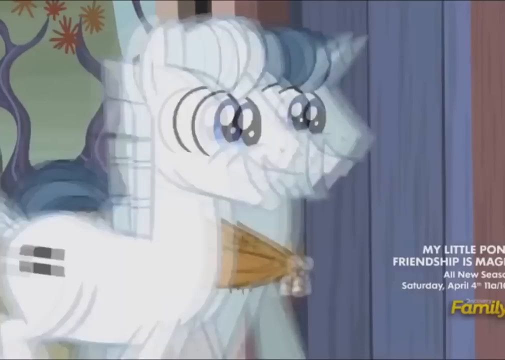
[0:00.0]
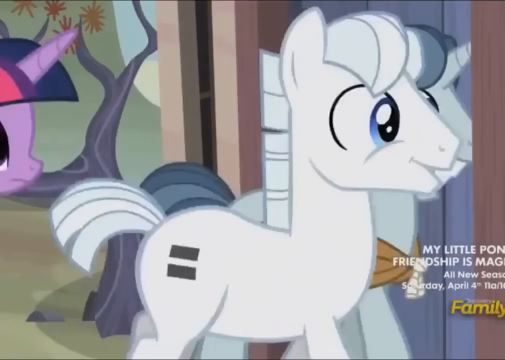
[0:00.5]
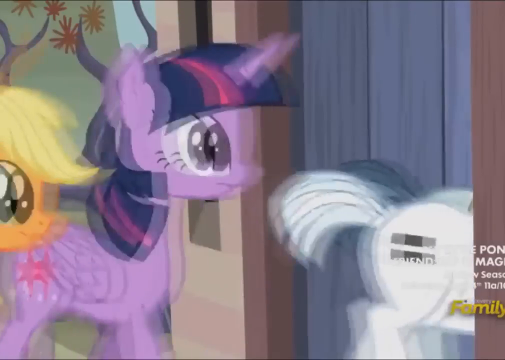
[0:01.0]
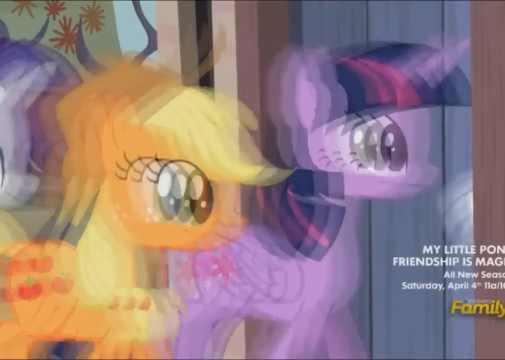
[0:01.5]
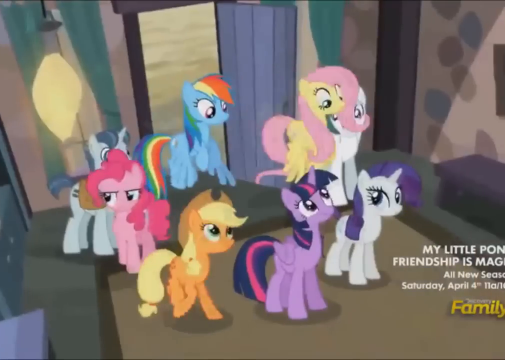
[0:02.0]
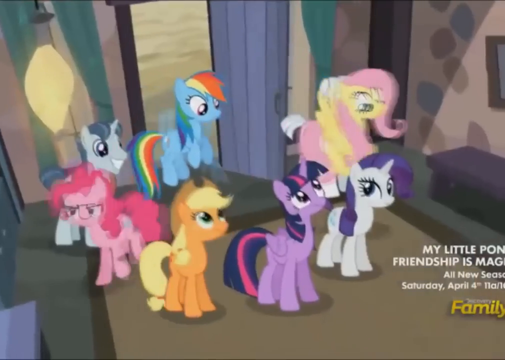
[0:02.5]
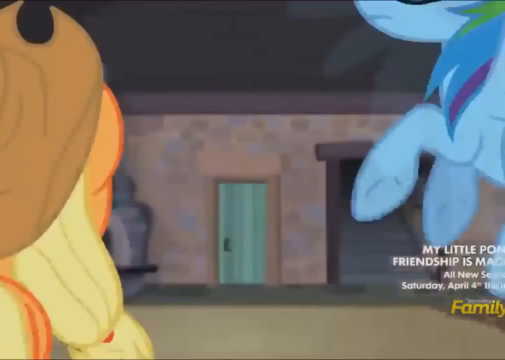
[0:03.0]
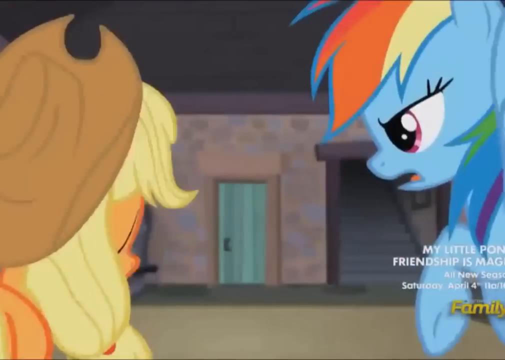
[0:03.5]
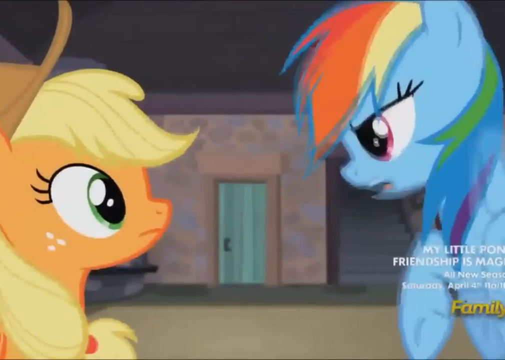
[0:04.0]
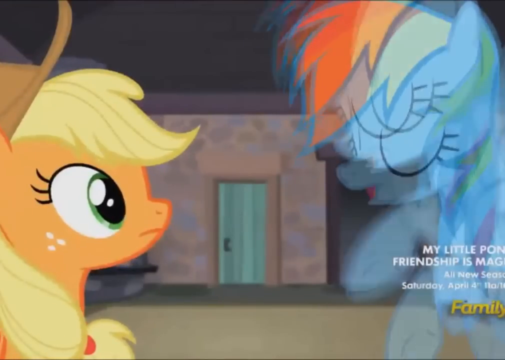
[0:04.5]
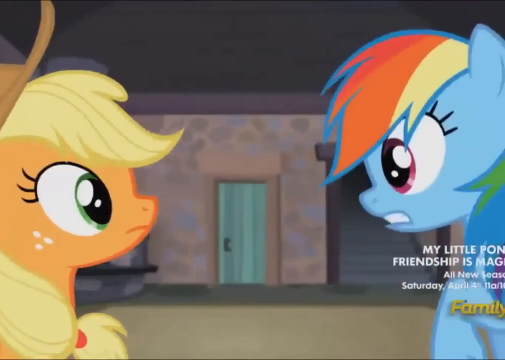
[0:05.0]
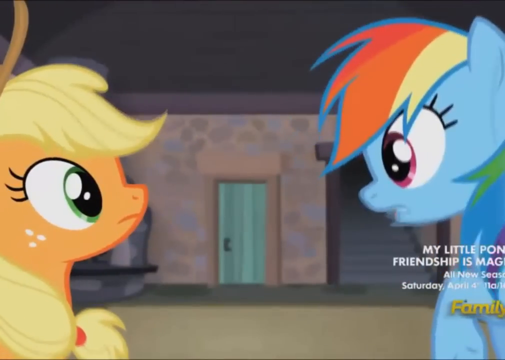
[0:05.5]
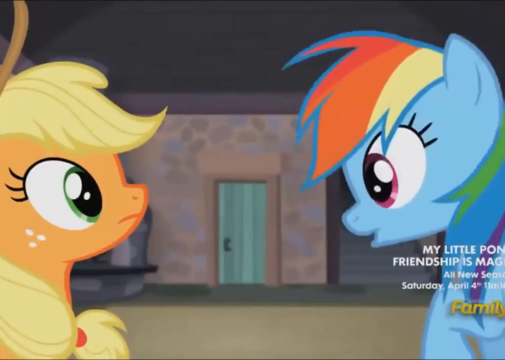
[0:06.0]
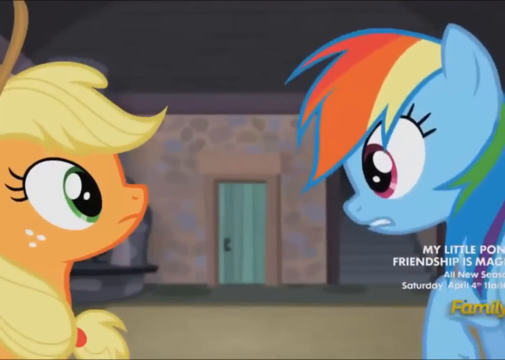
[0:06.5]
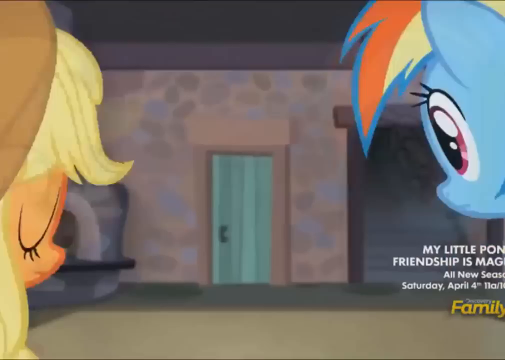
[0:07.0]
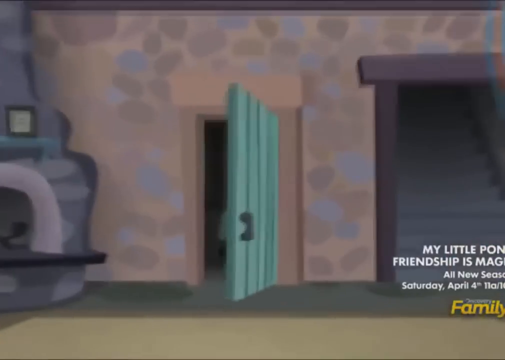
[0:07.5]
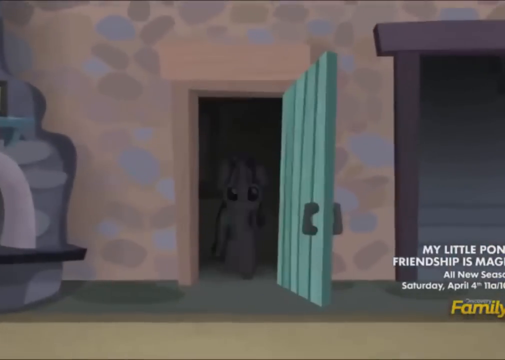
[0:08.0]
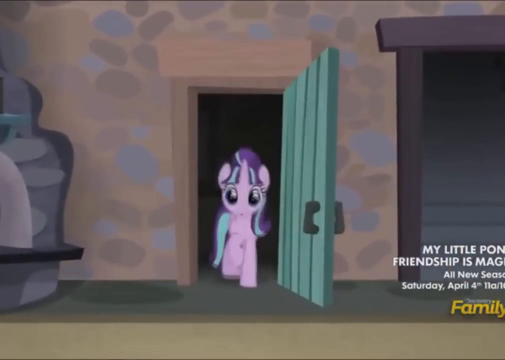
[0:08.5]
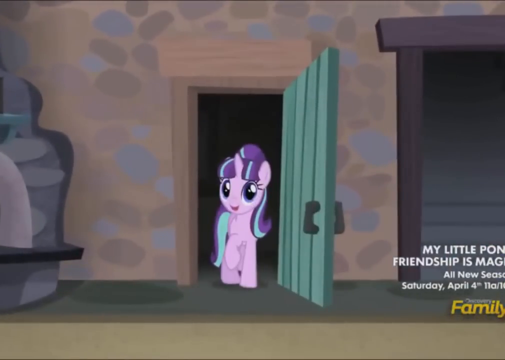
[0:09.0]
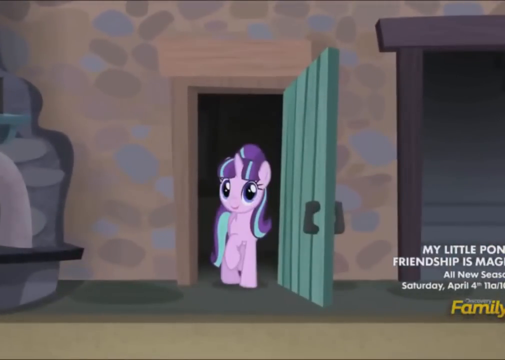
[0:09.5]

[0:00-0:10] The ponies go through a door to the right, and then they all stand toward the entrance of the building as a green door in front of them opens. The pony that comes out is light purple with a horn in the middle of her forehead, so she is perhaps a unicorn, and her mane is dark purple and brighter purple with stripes of a bright sort of teal. Among the other ponies, one is white with a purple mane and very big purple eyes with eyelashes, and another looks identical to the one that came through the door. There is an orange pony with a yellow or blondish mane, a light pink pony with a bright or dark pink mane, and a light yellow pony with wings and a curly light pink mane and tail. At the back of the doorway is a light blue pony with a rainbow-coloured mane and tail, and in the back left corner, hidden behind the very pink pony, is a light grey or blue pony with a dark blue/grey sort of mane and tail. Some of the ponies have unicorn horns.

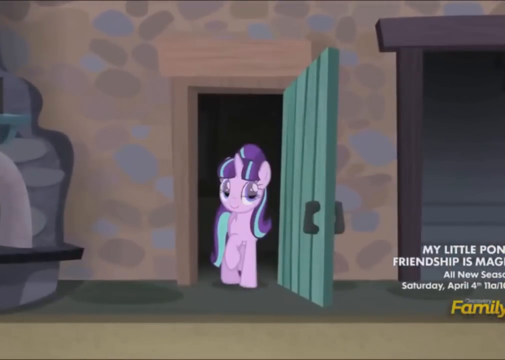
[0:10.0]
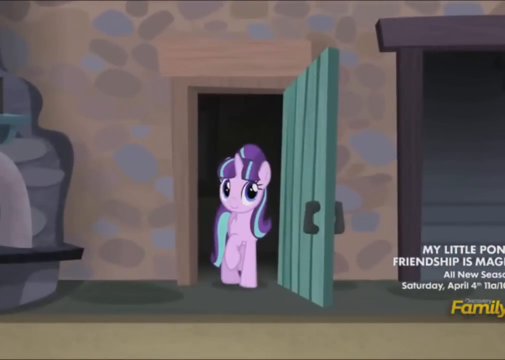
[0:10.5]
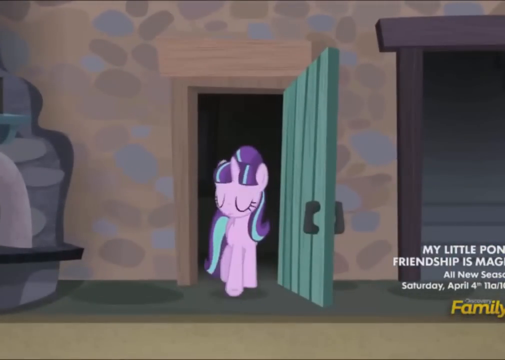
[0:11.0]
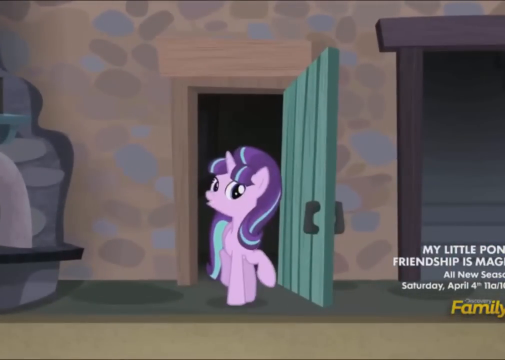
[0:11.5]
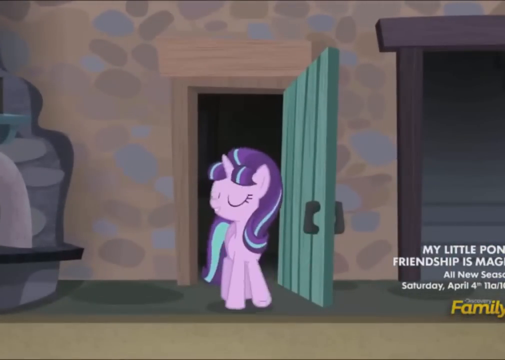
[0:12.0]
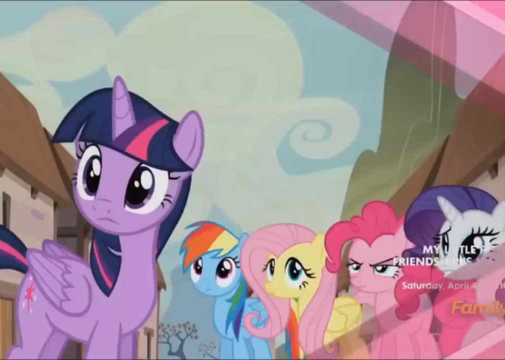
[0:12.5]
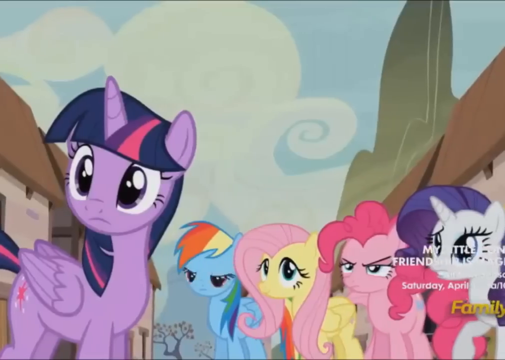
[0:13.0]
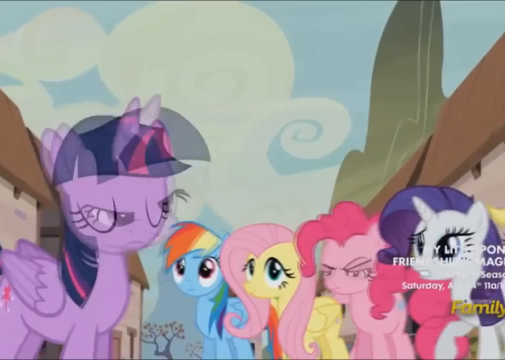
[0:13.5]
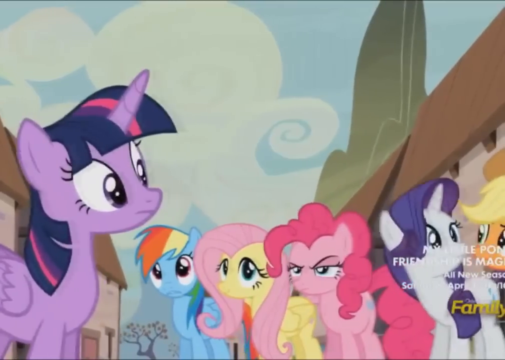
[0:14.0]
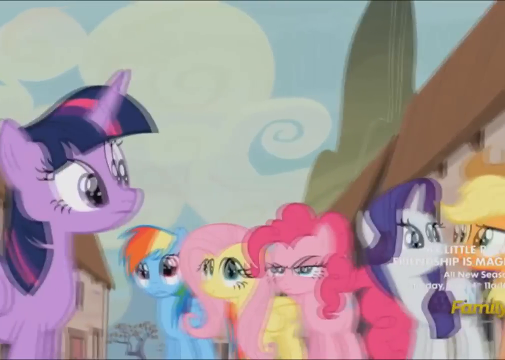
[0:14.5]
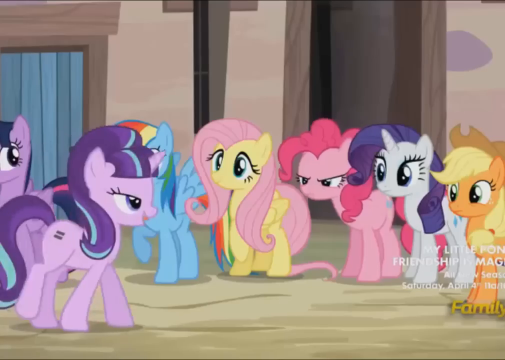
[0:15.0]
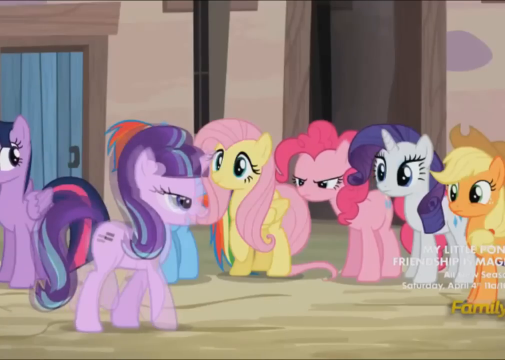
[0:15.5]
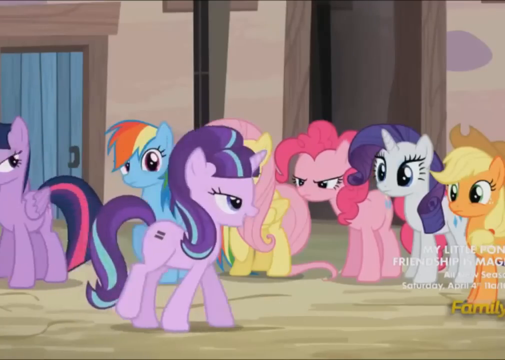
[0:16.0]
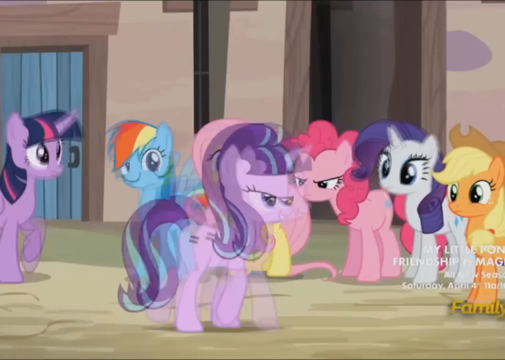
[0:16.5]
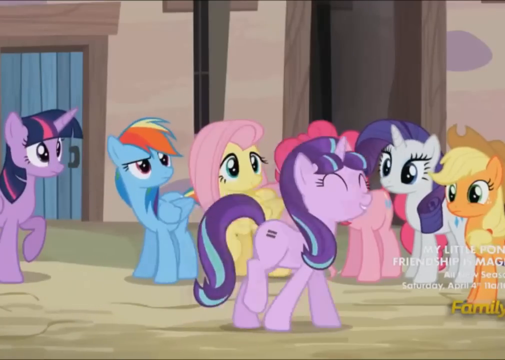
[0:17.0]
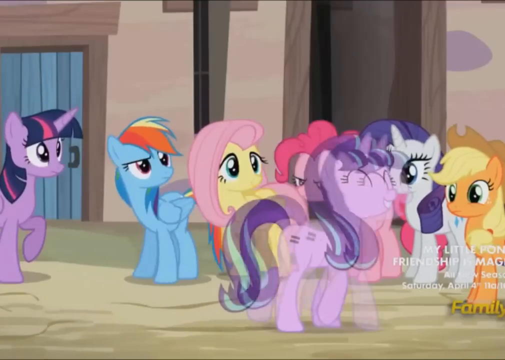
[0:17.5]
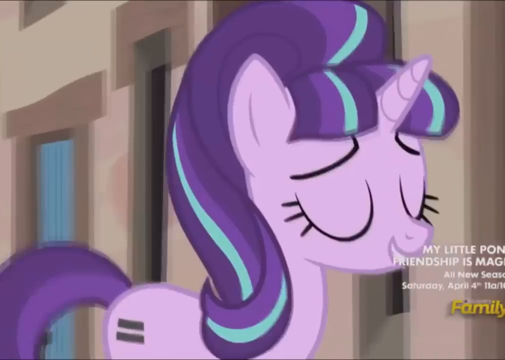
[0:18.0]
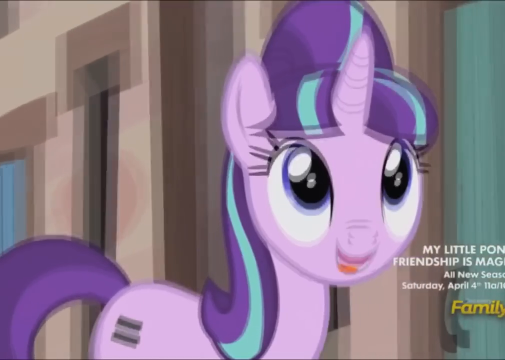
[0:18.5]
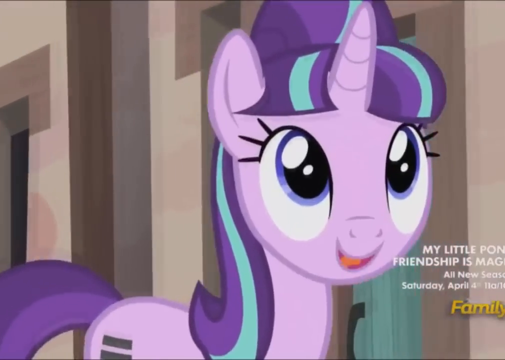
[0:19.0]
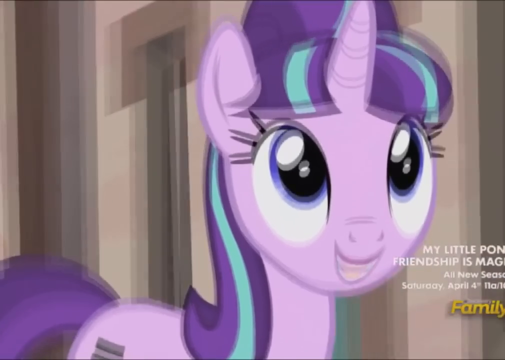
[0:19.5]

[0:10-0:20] A little purple unicorn pony walks out the door and goes forward. A graphic of a big pink striped arrow then crosses the screen from left to right. The shot changes to the animated ponies outside, with houses in the background to the right and the left. A number of ponies are lined up on the right, and one is on the left: the one with little purple wings, a purple horn and stripy navy and pink hair, who seems very similar to one of the others. She walks along the road in front of the other ponies with her eyes closed and then opens them. In the room at the start, the floor appears to be made of grey stone and the walls have a kind of pebbled stone pattern: a mid-beige background with many irregular oval shapes in shades of grey, brown, light blue and purple, apparently representing stones. To the left is what looks like part of a fireplace or a stove, and to the right are steps that go up to another floor of the home.